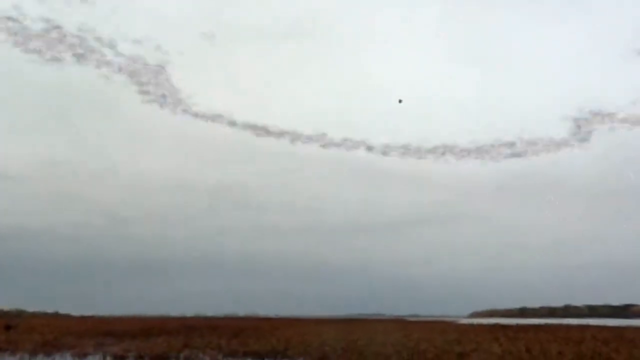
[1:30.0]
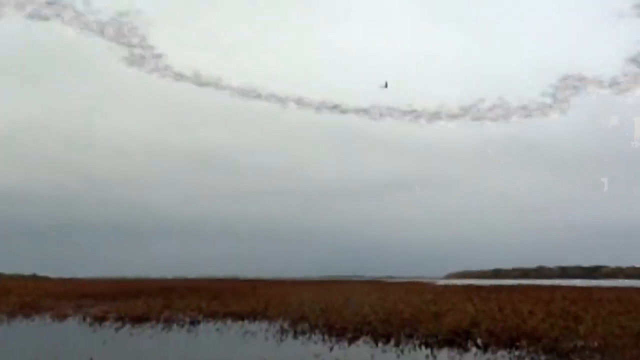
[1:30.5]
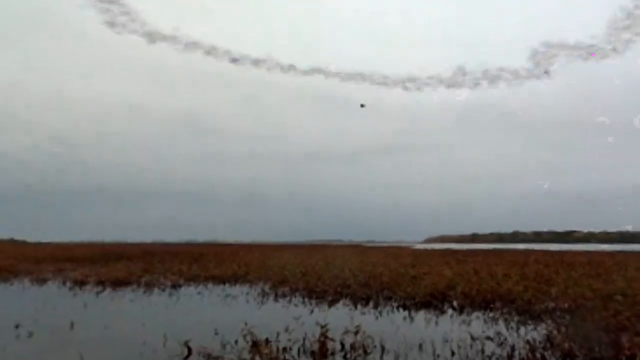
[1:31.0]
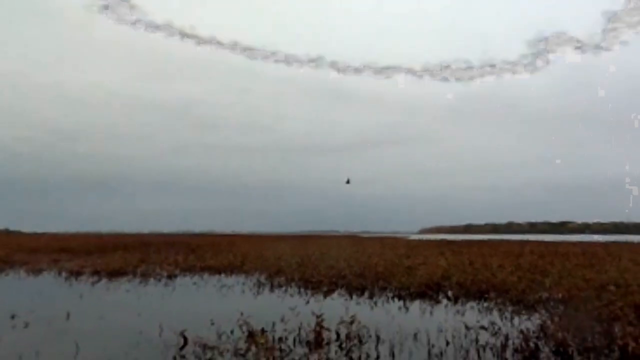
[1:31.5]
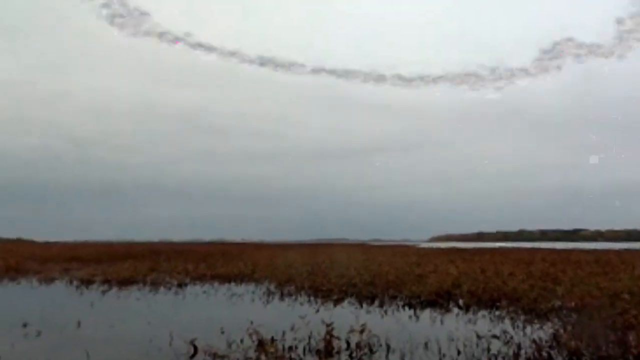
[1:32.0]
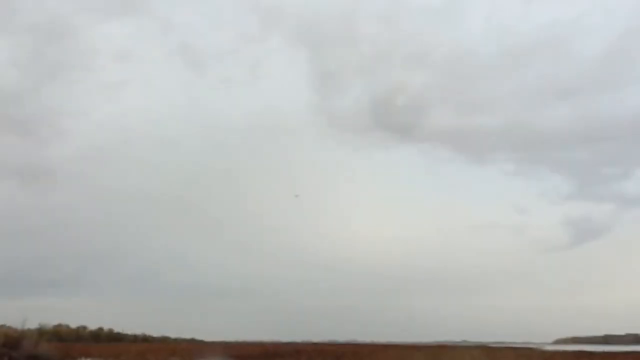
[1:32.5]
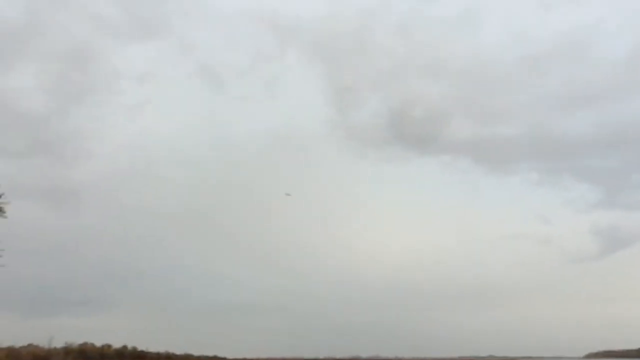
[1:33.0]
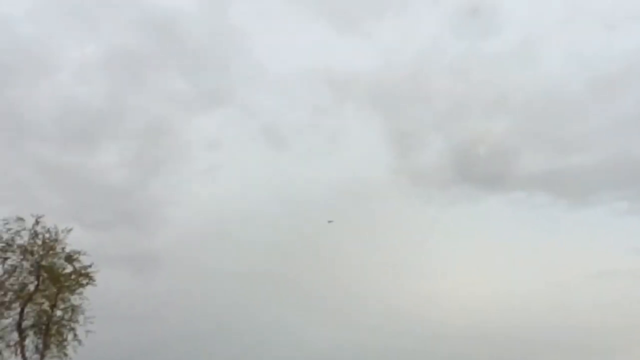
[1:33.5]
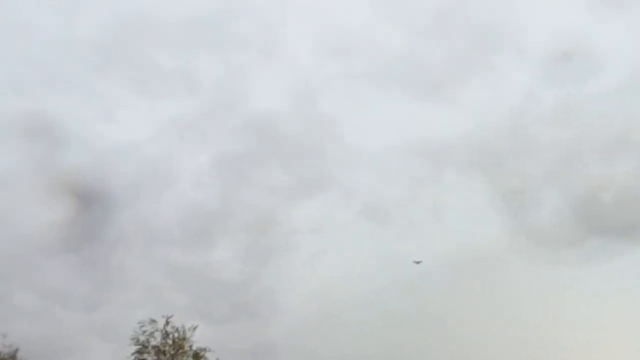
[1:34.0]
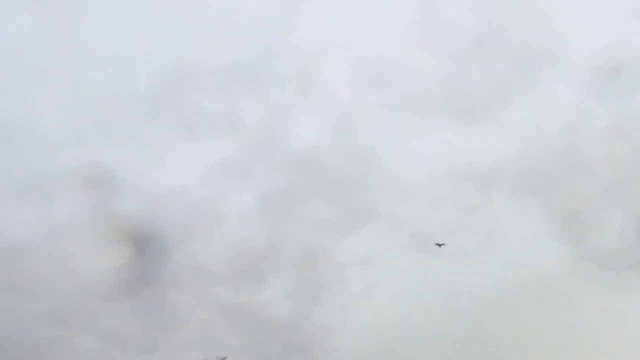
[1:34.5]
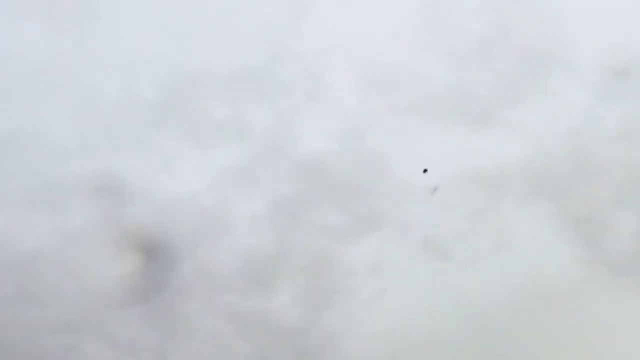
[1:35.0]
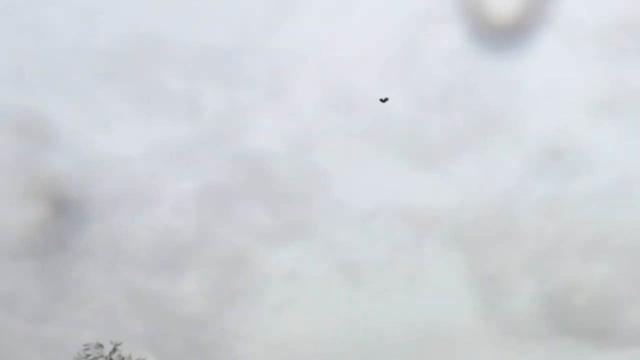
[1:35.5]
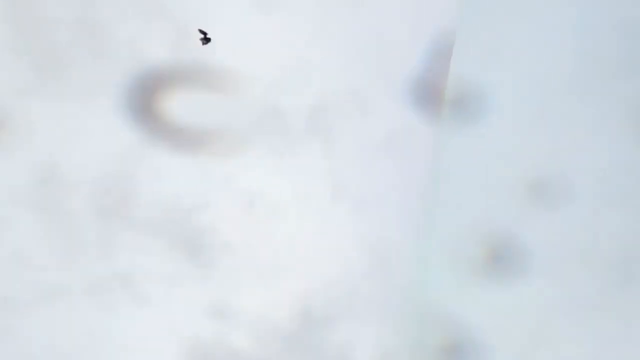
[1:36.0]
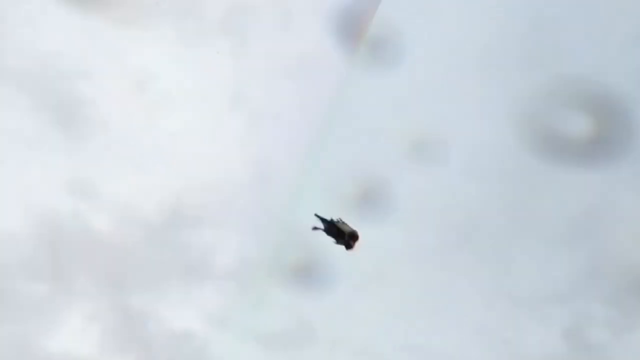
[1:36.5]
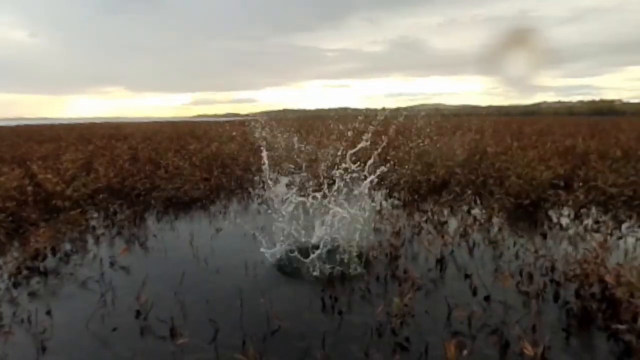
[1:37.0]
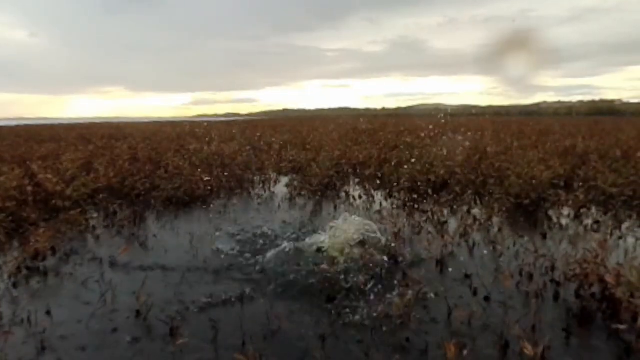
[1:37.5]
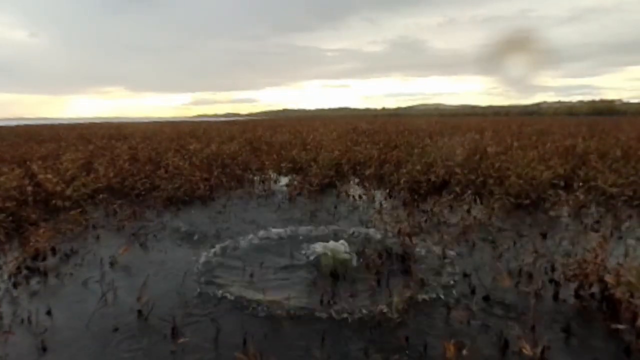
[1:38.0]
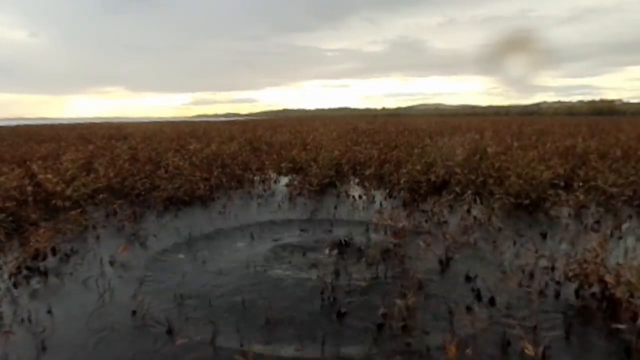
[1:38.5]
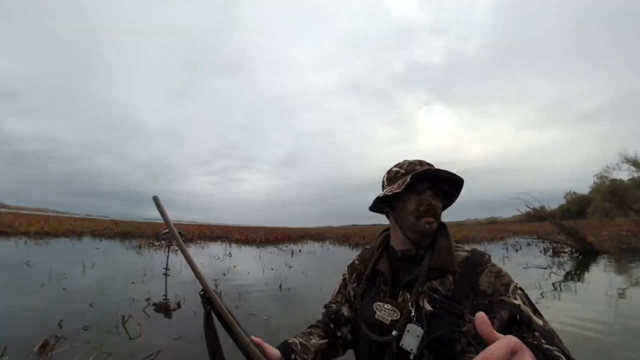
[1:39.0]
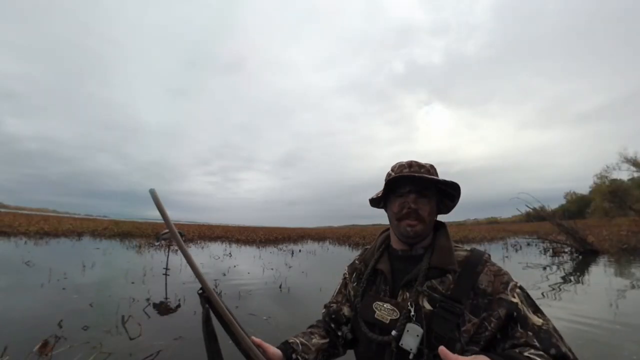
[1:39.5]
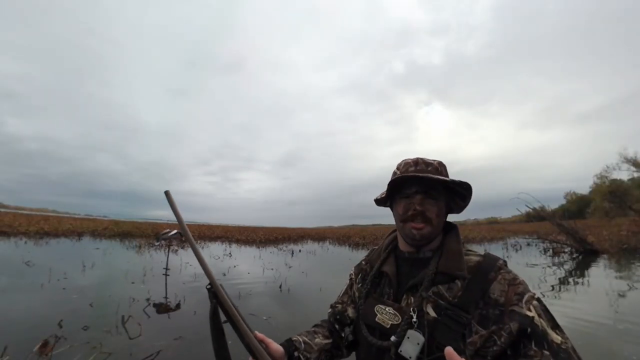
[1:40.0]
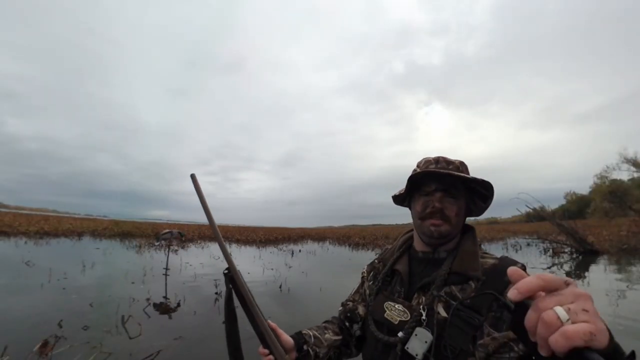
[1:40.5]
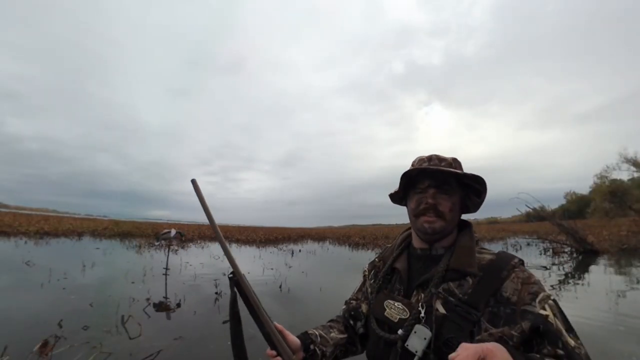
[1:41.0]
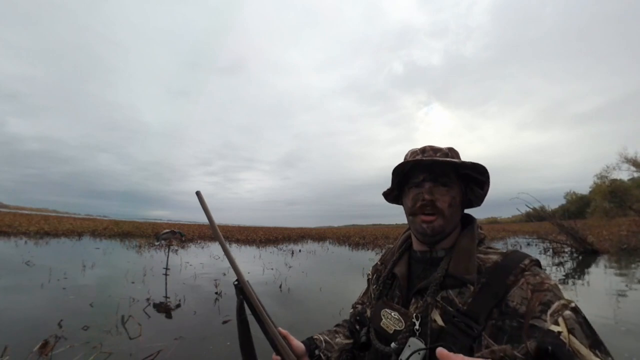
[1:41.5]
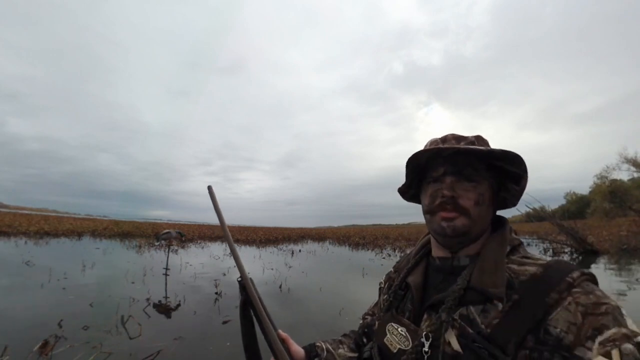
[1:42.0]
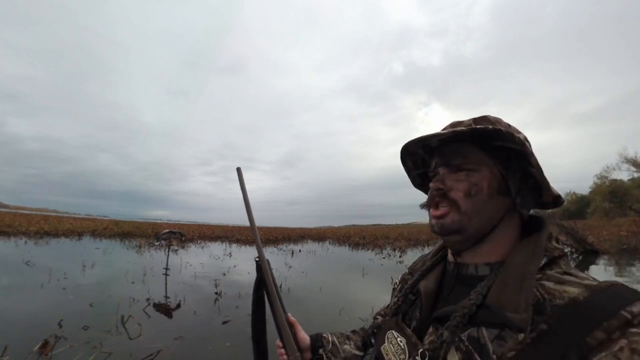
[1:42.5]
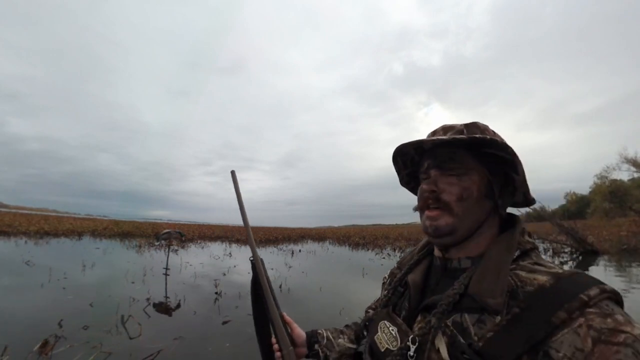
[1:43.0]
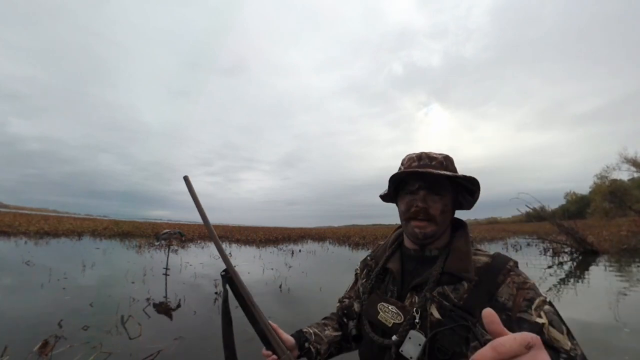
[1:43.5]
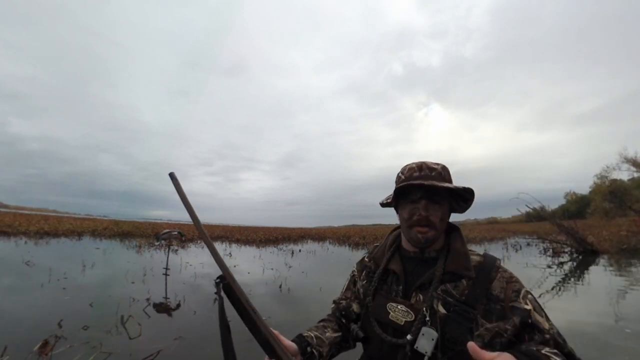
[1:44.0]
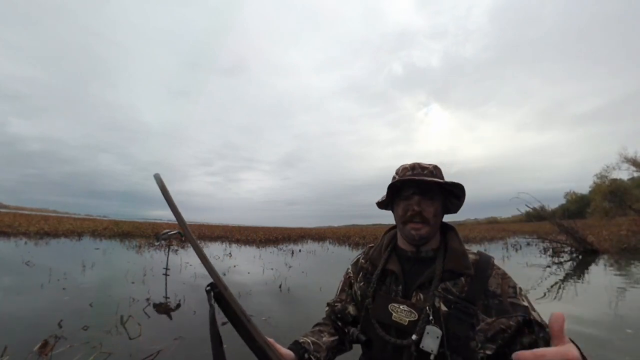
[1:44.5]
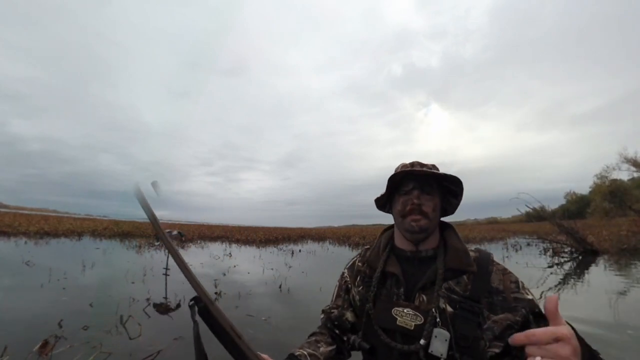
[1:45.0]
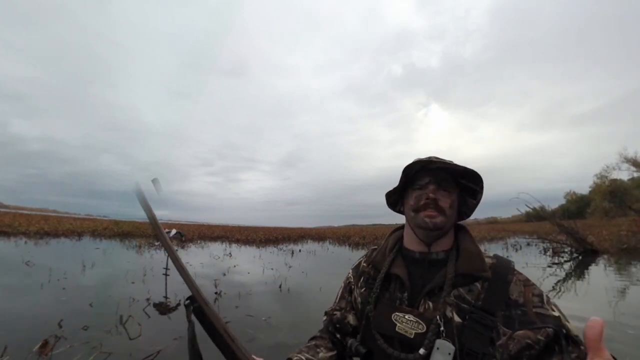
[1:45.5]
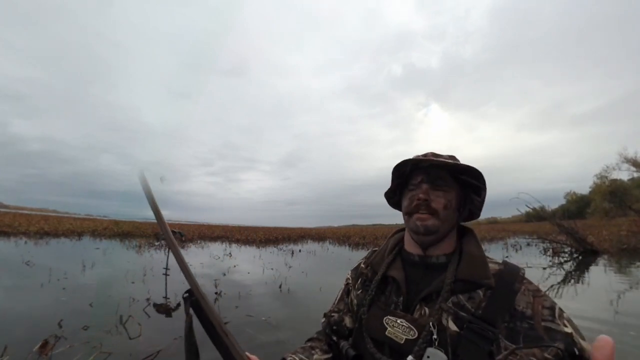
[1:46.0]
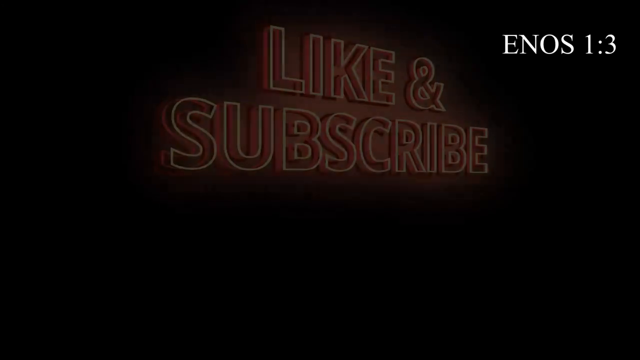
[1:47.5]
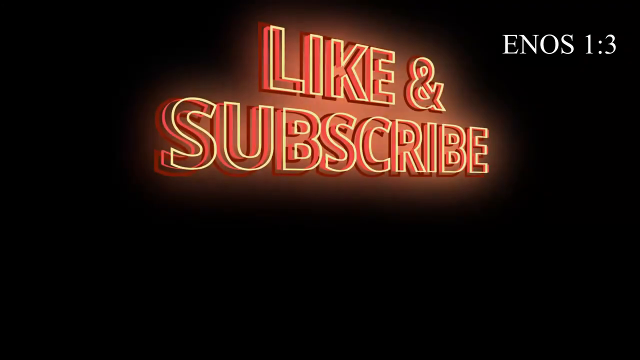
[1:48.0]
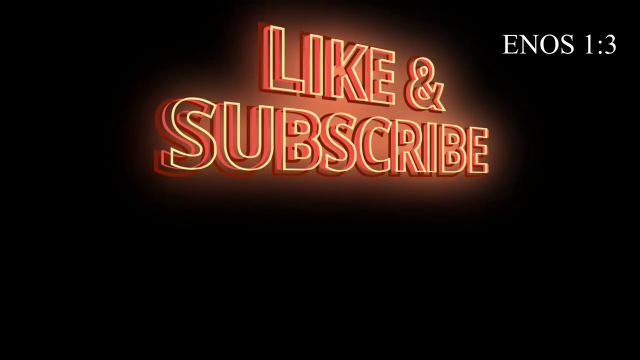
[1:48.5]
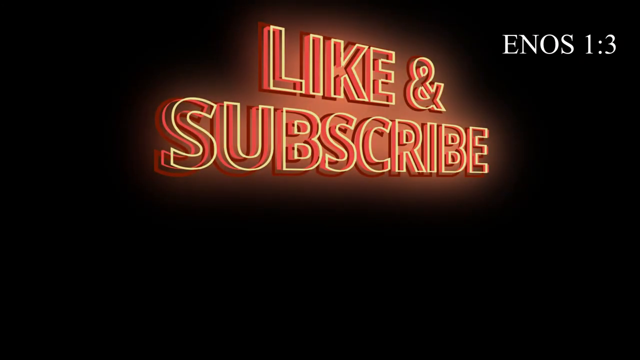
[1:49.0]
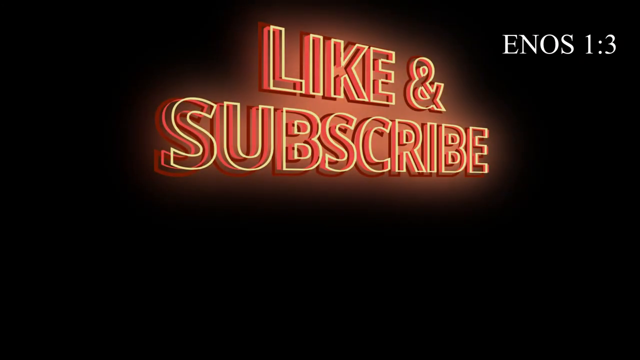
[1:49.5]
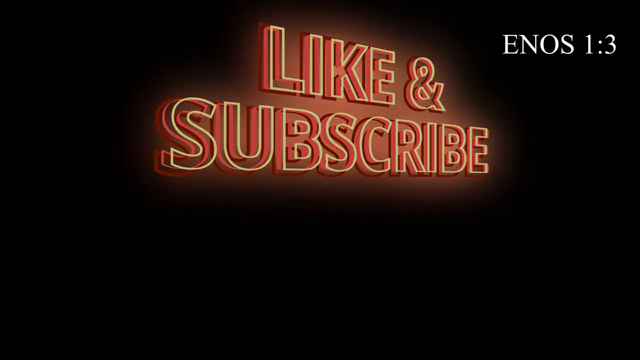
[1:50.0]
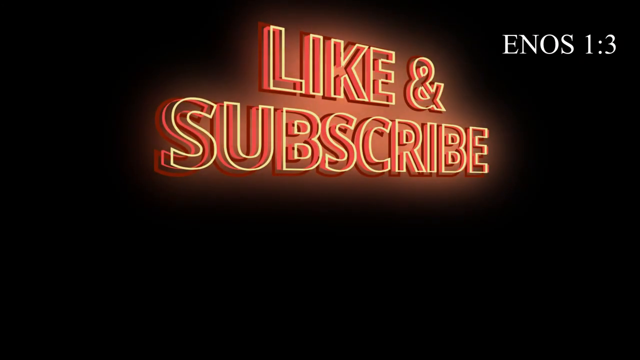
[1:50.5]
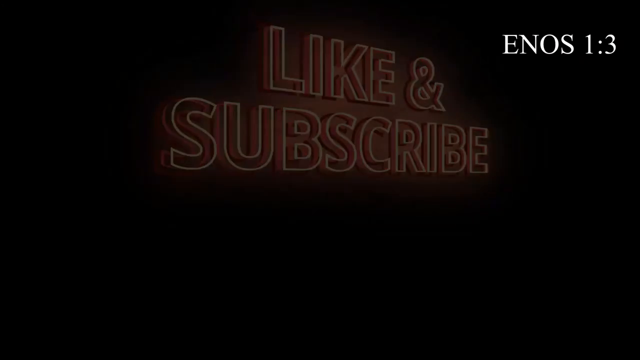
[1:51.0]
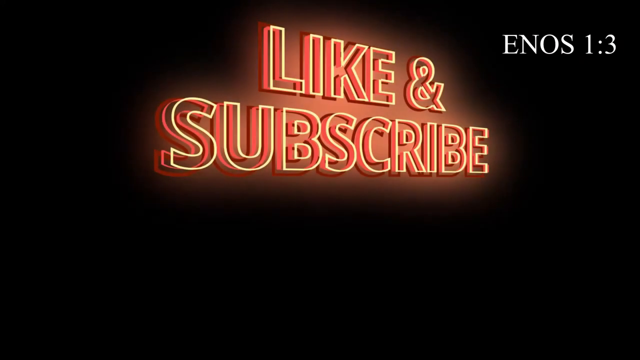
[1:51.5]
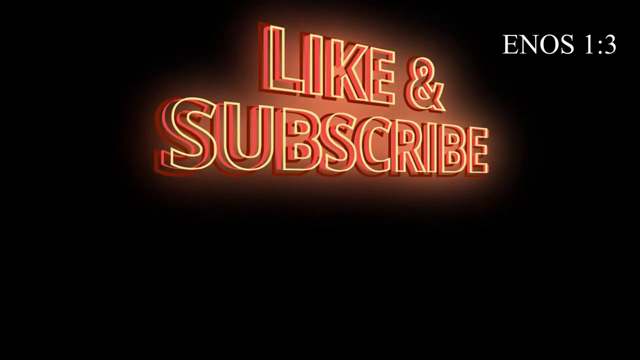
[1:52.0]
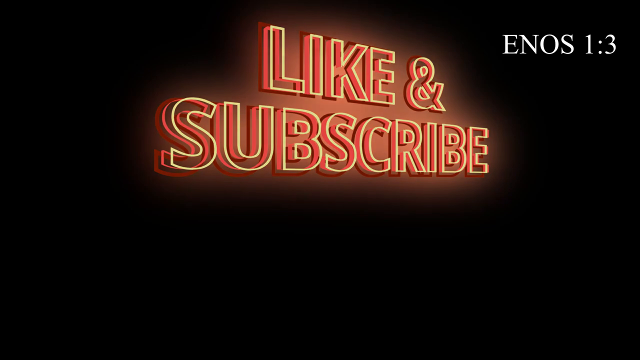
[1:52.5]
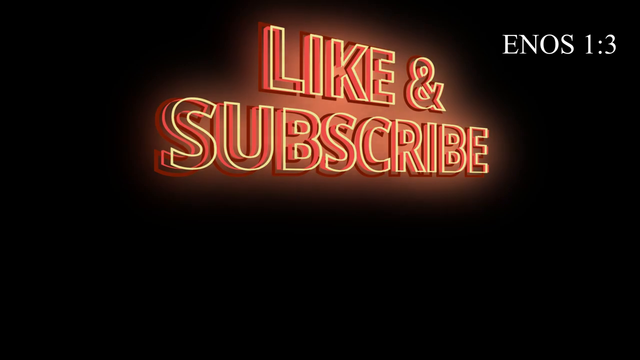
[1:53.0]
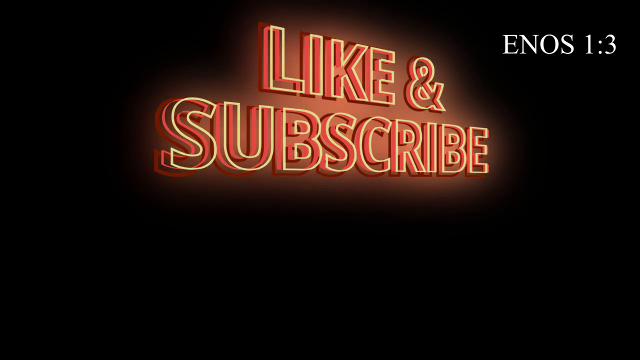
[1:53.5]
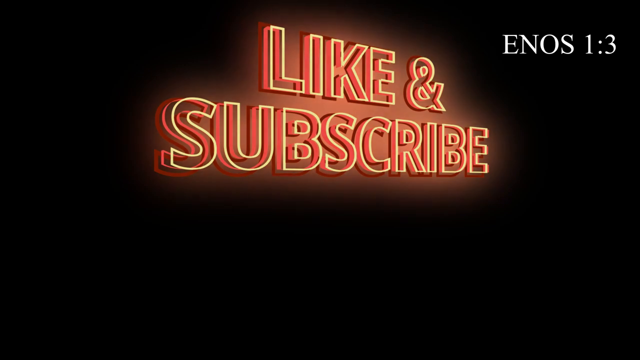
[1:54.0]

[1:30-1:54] More ducks fall to the ground, probably after being shot. Some flap their wings fast until they are shot and fall straight down. Their long beaks, necks, and typical duck legs are visible as they fall, and they make a splash in the water. The video cuts to the hunter, who holds his rifle in his right hand and talks to the camera. He seems to be even deeper in the water than before, and he uses his free left arm to gesture as he talks. The gun in his right hand looks a bit weird at the edge, as the camera does not cover the whole gun. The video then cuts to a black background with fake neon text reading "like and subscribe" in yellow and orange, and the words "Enos 1:3" at the top right of the screen.